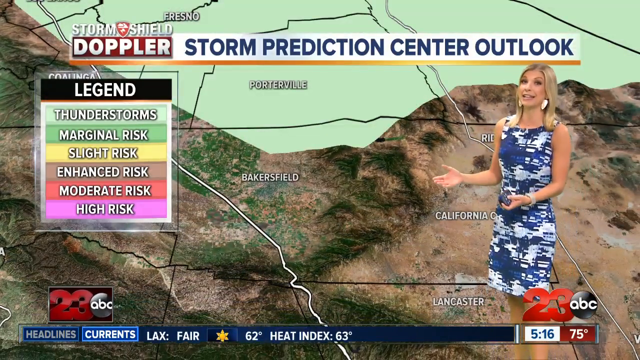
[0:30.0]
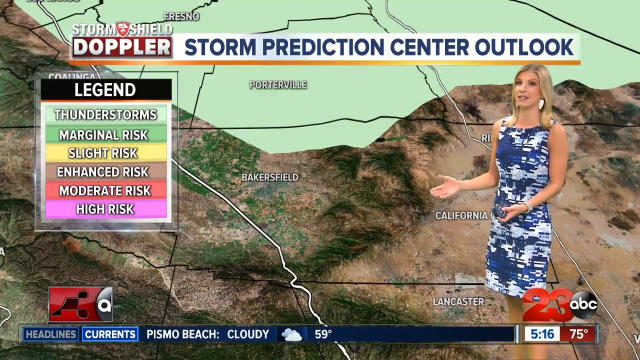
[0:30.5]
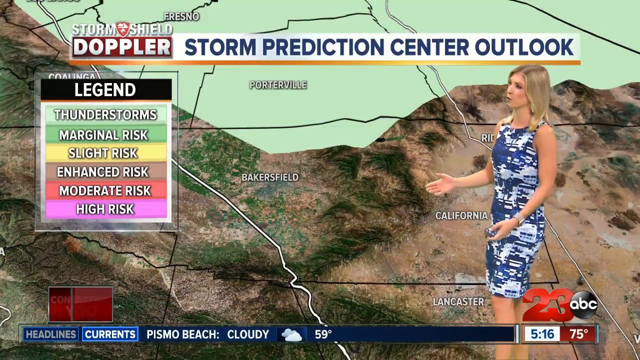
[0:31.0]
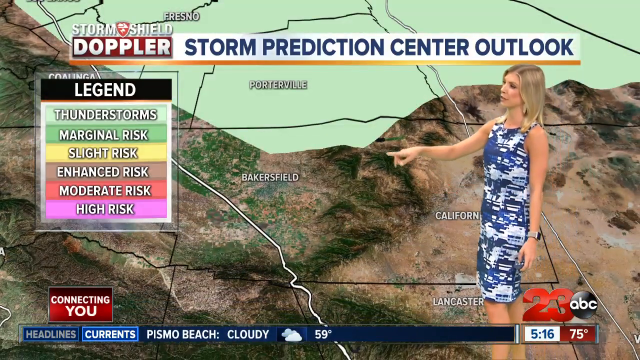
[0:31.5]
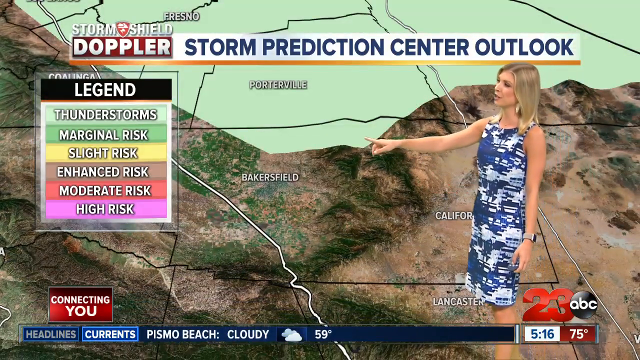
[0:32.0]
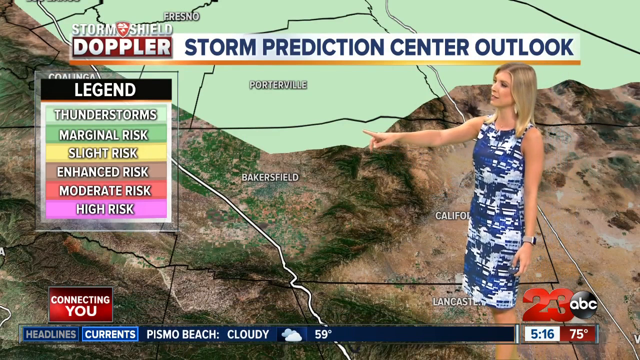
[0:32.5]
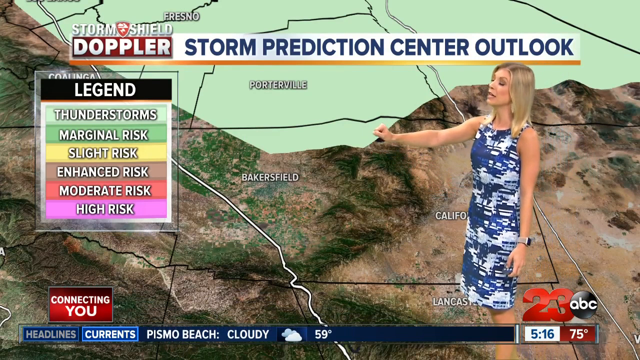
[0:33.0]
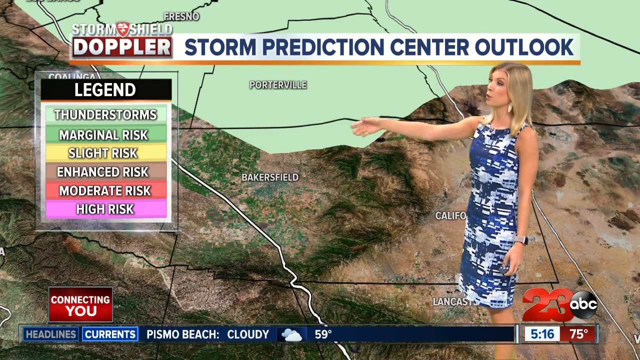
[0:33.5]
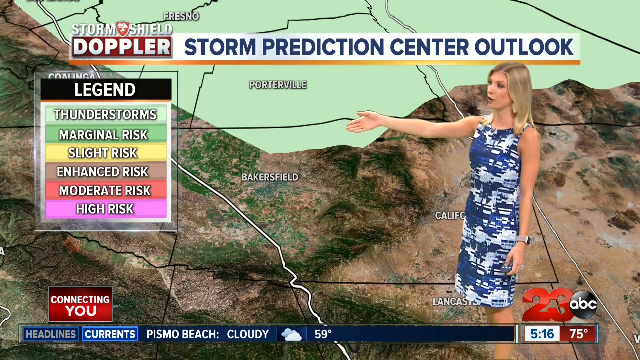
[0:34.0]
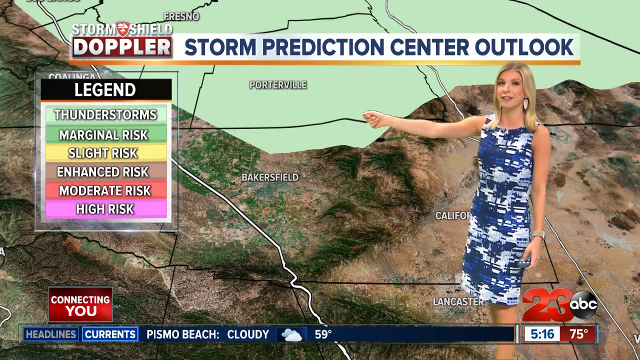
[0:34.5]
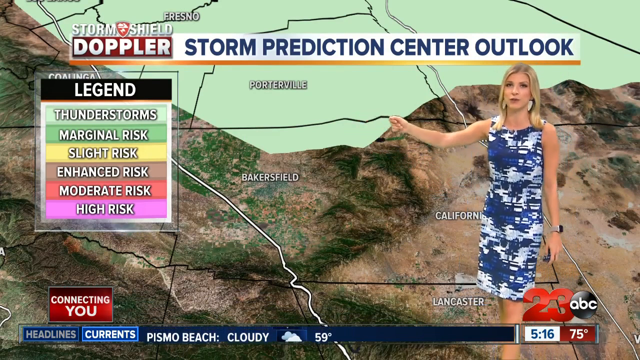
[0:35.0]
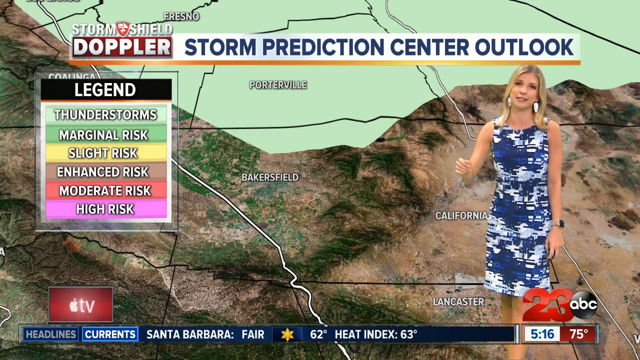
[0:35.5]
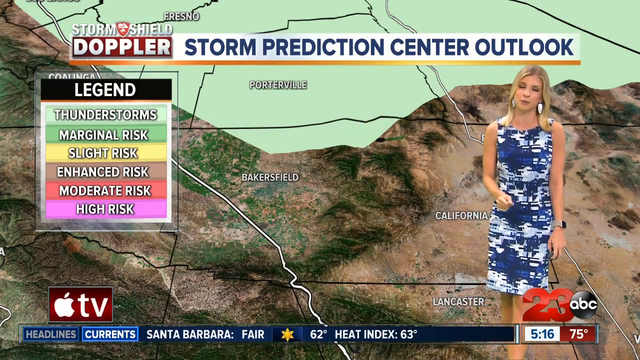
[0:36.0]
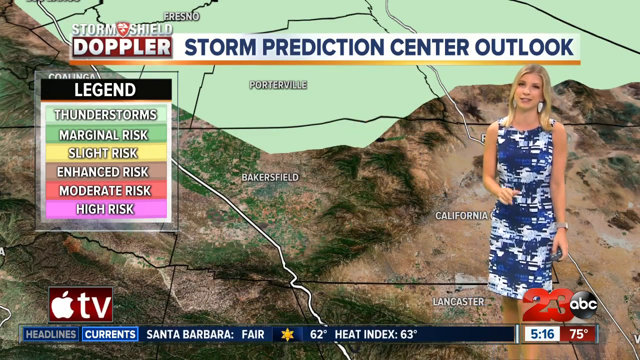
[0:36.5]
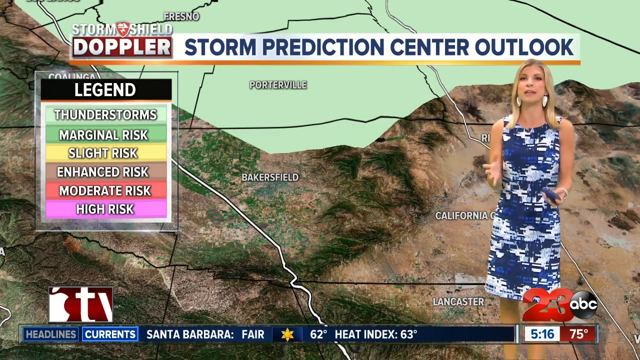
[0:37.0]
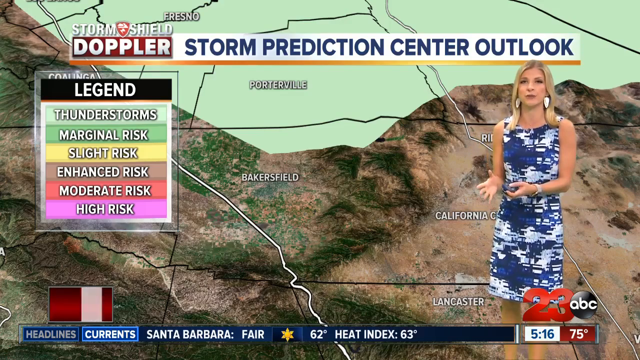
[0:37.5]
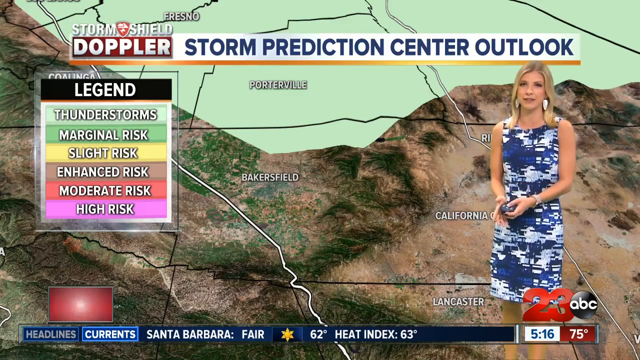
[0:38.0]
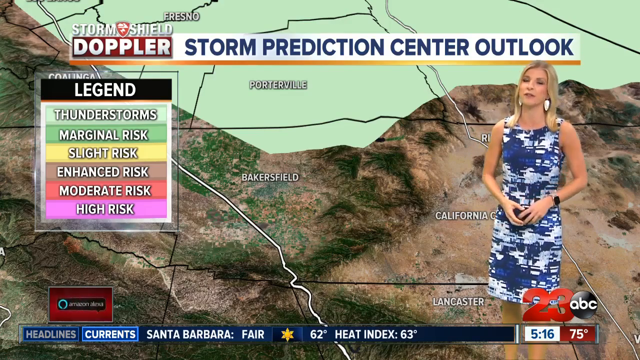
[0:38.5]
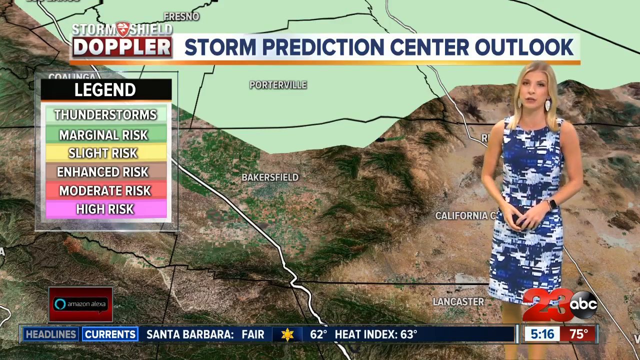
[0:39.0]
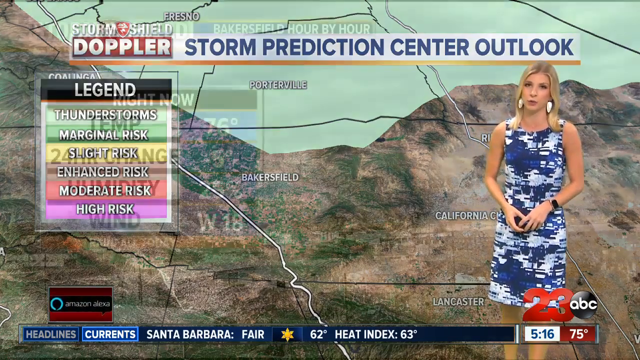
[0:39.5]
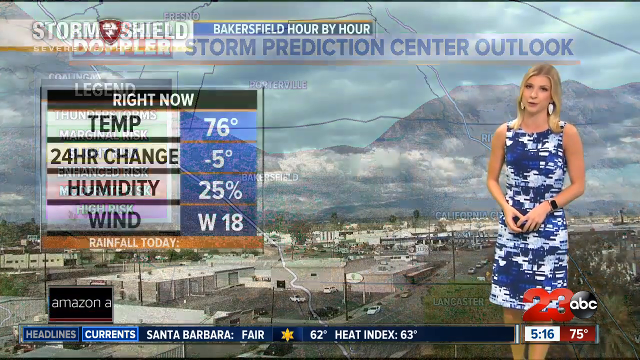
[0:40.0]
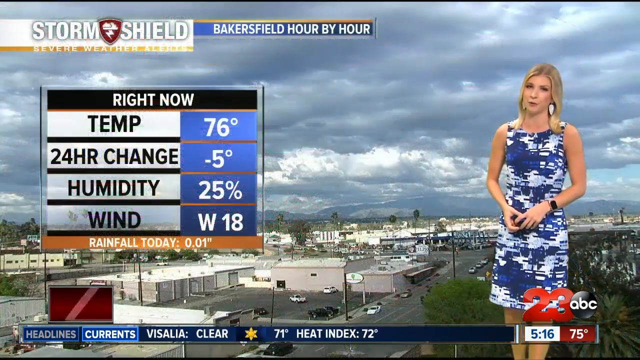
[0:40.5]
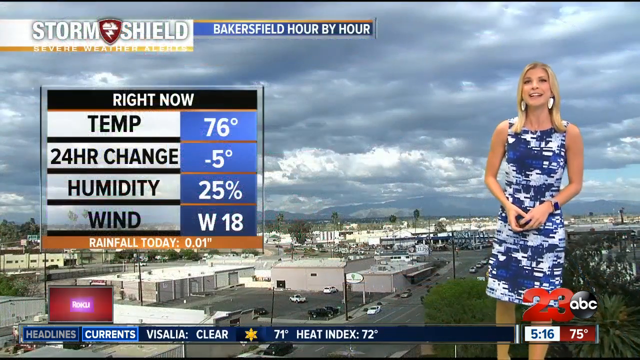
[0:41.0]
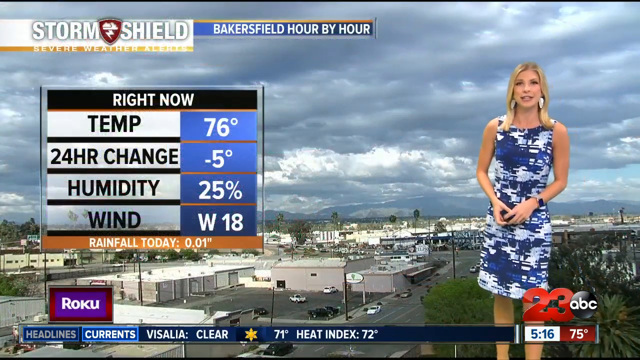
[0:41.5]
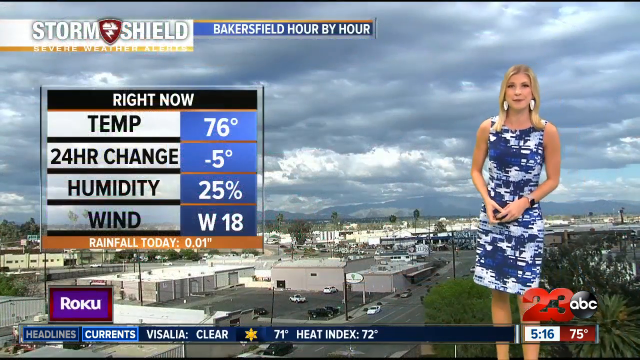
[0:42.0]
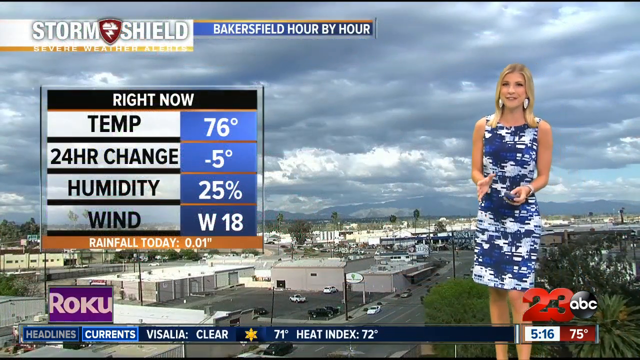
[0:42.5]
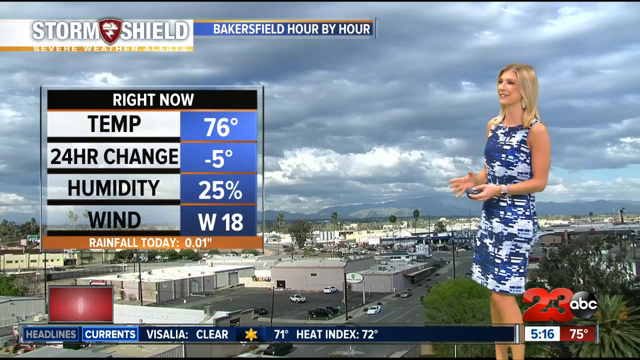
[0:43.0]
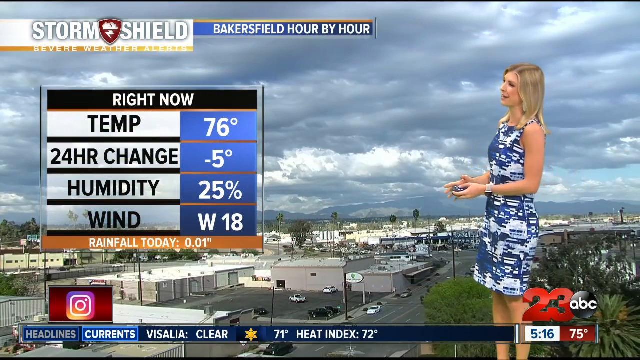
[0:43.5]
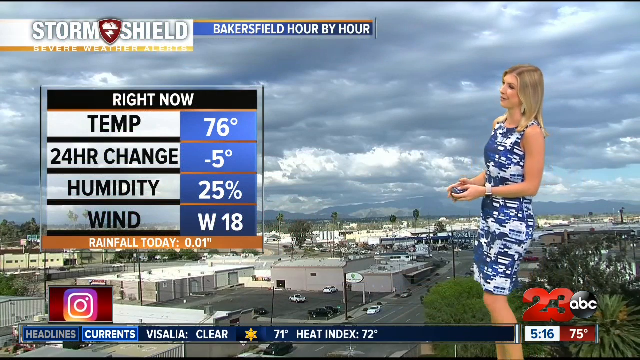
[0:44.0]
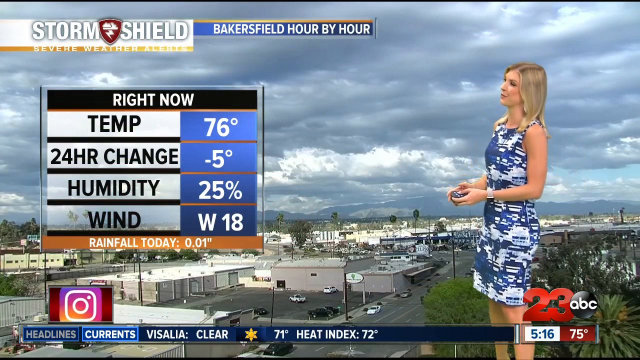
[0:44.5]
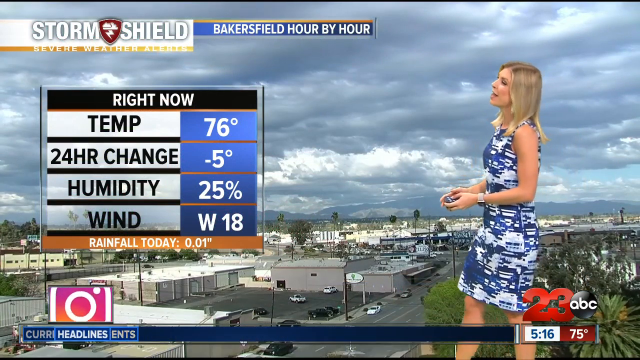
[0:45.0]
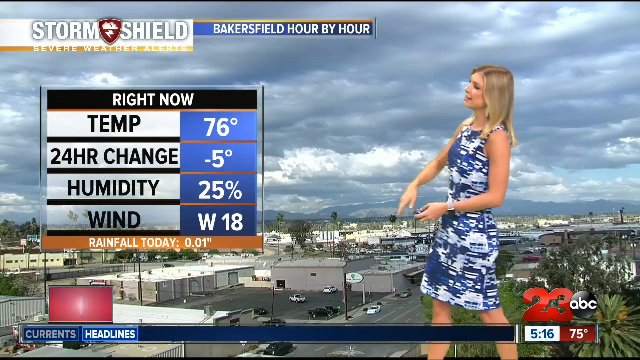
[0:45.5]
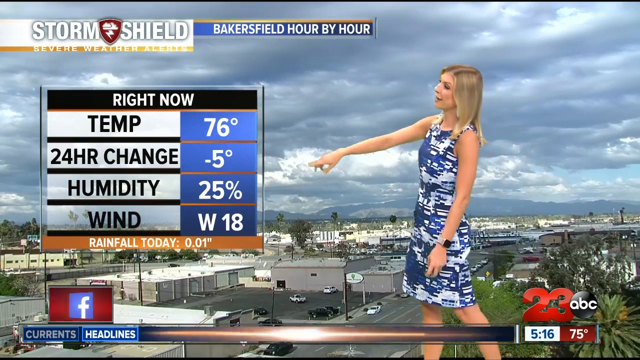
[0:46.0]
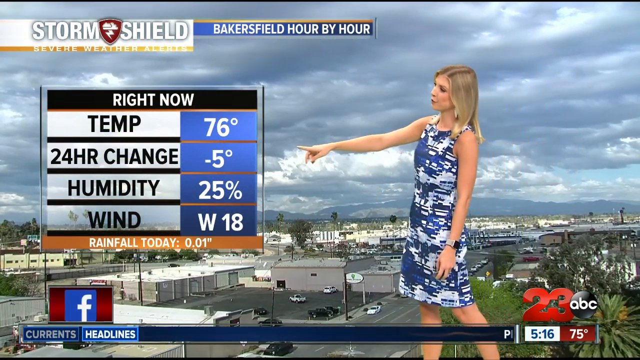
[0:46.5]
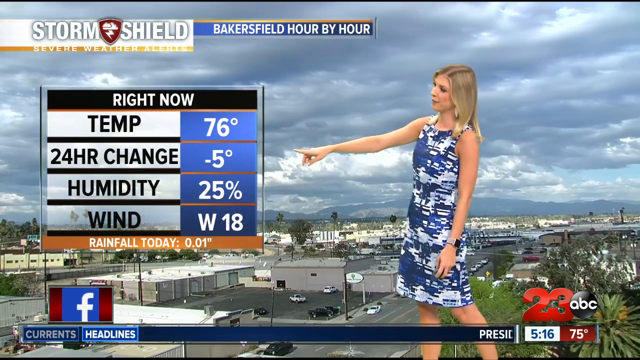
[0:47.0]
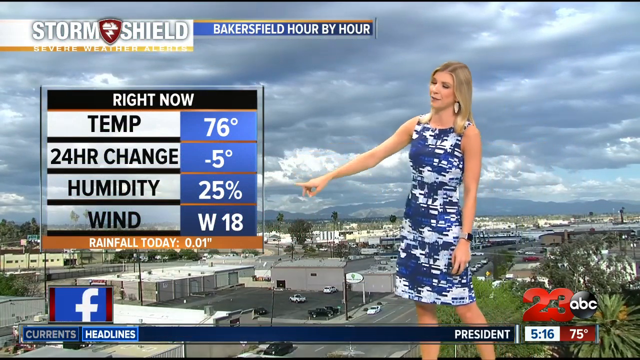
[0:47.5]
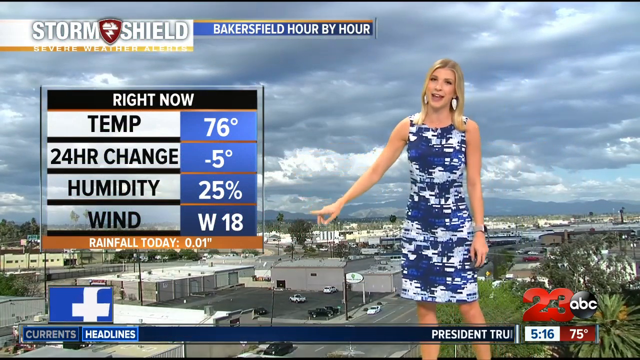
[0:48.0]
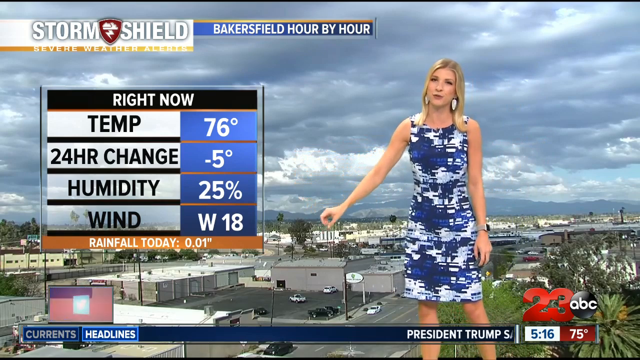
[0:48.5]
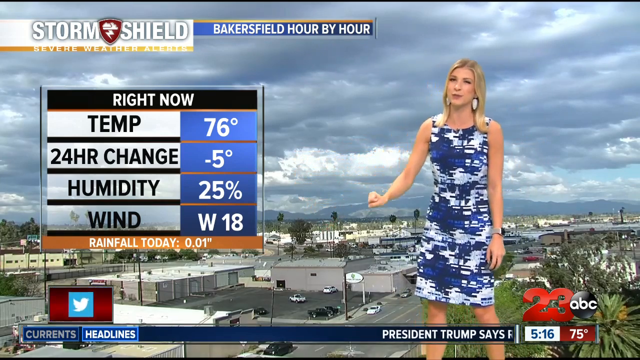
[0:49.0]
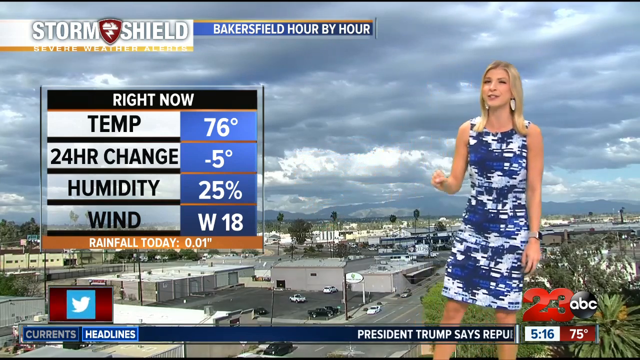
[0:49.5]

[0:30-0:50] The news anchor is still standing in front of the green screen with the map of California, and the legend is still up; based on it, there appear to be thunderstorms in an area. She stands pointing at it, holding a clicker in her hand. The view switches to an aerial view labeled "Bakersfield hour by hour," with many darker clouds in the sky over Bakersfield. A small graphic comes up showing "right now" a temperature of 76, a 24-hour change of negative 5 degrees, humidity 25, wind west at 18, and rainfall today 0.01. She appears to be going over that graphic. At the bottom, handles for Facebook, Instagram and Twitter come up.